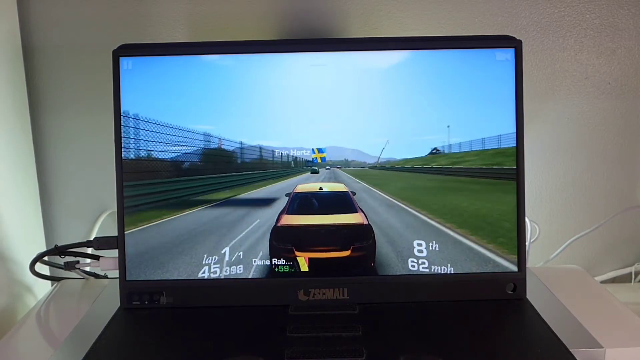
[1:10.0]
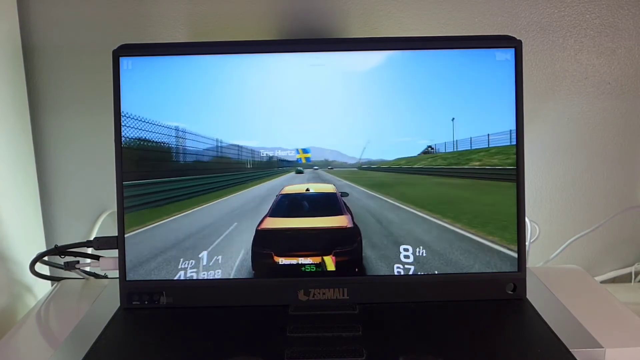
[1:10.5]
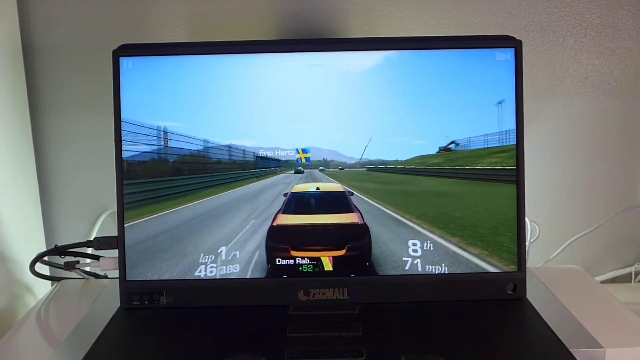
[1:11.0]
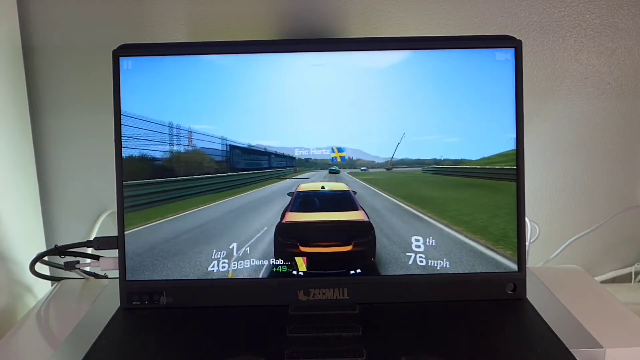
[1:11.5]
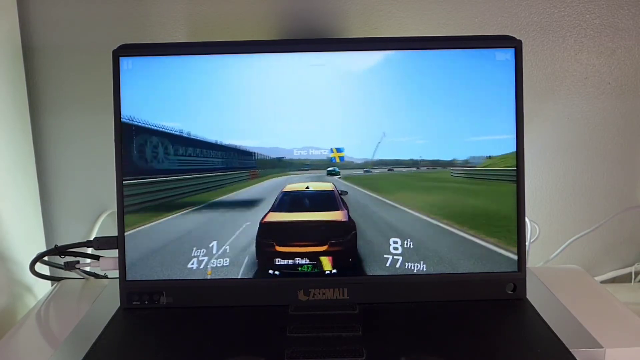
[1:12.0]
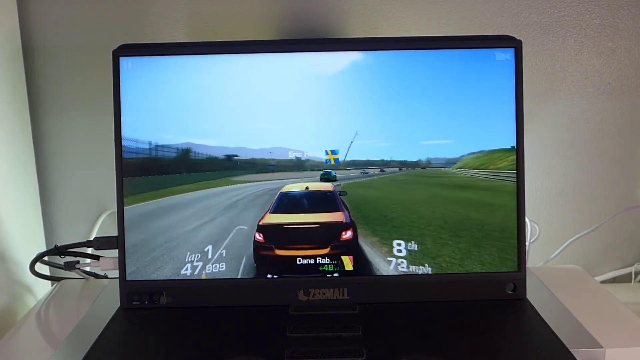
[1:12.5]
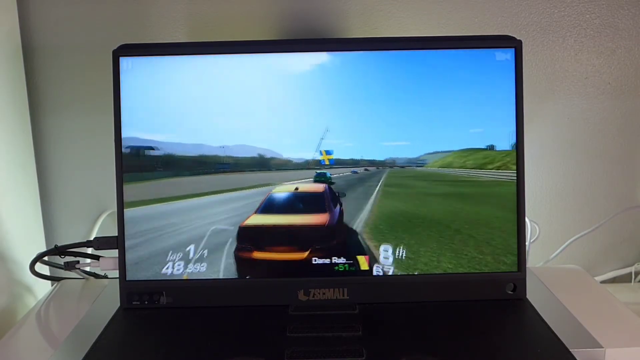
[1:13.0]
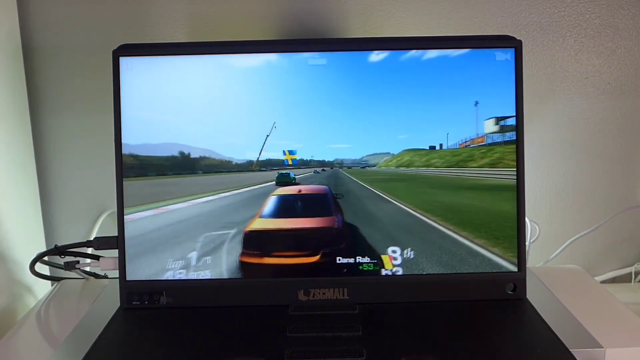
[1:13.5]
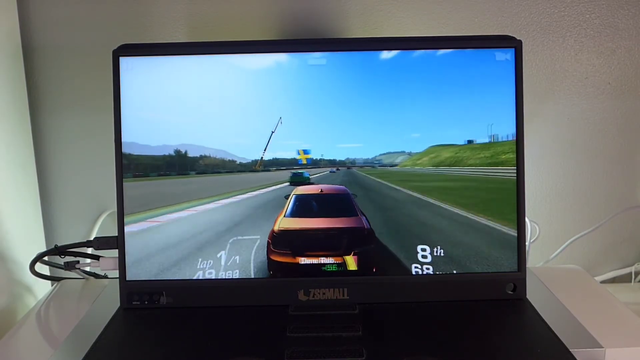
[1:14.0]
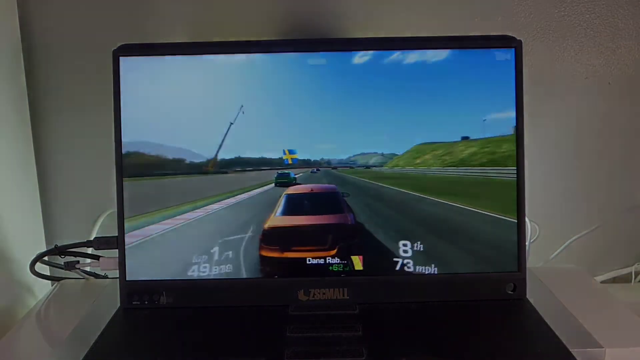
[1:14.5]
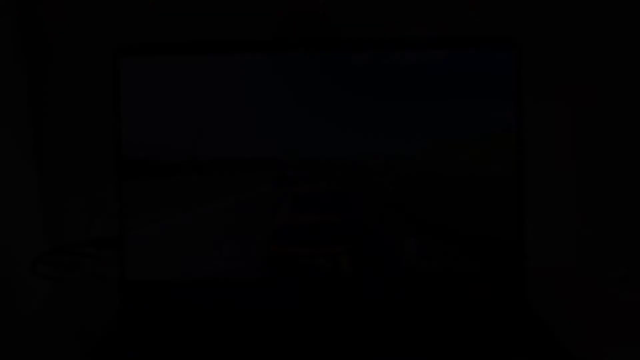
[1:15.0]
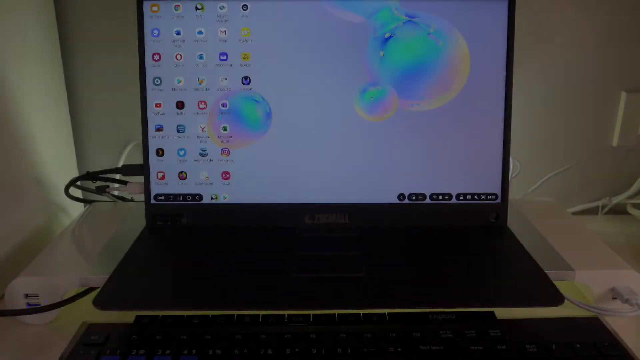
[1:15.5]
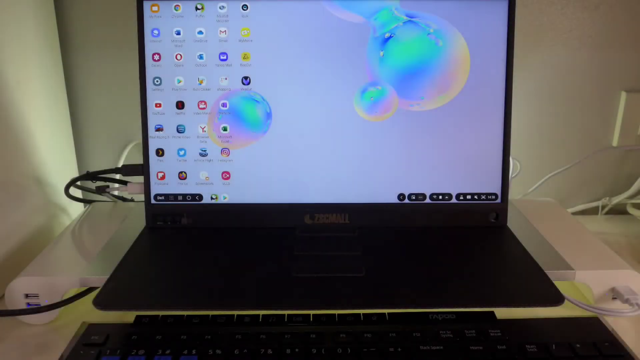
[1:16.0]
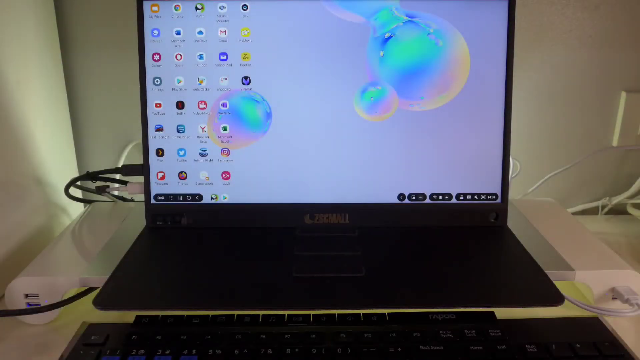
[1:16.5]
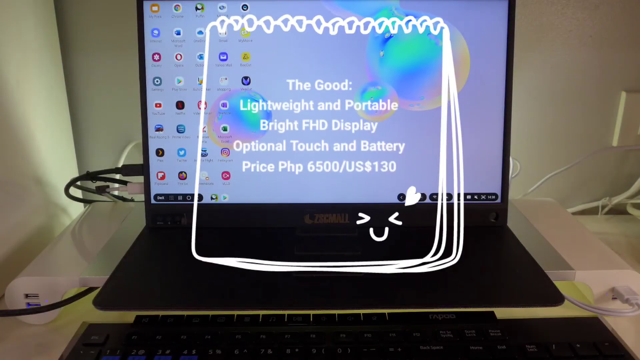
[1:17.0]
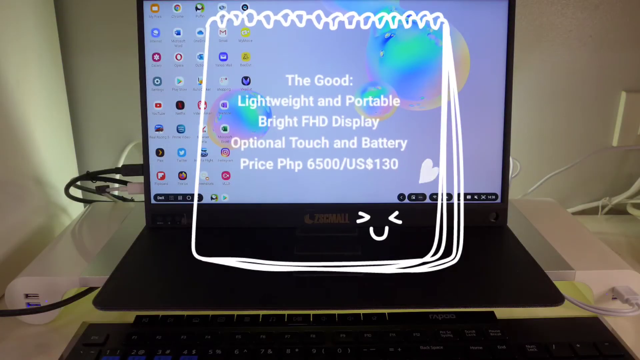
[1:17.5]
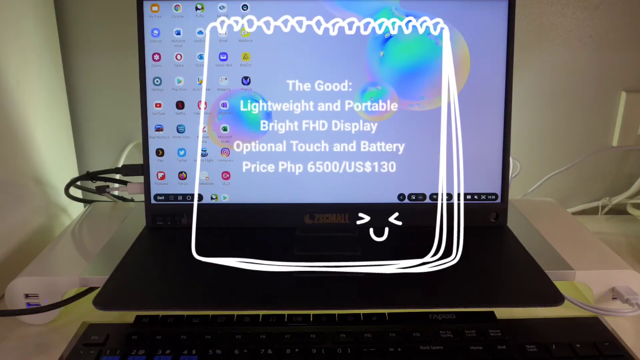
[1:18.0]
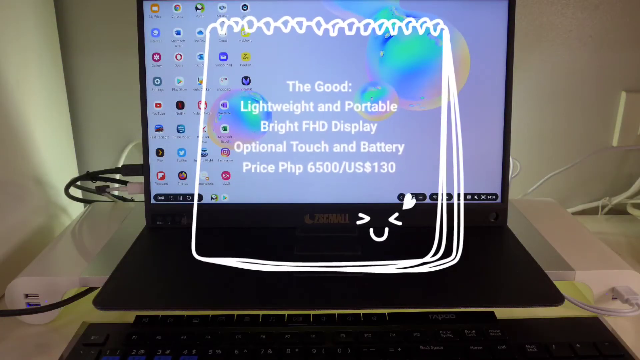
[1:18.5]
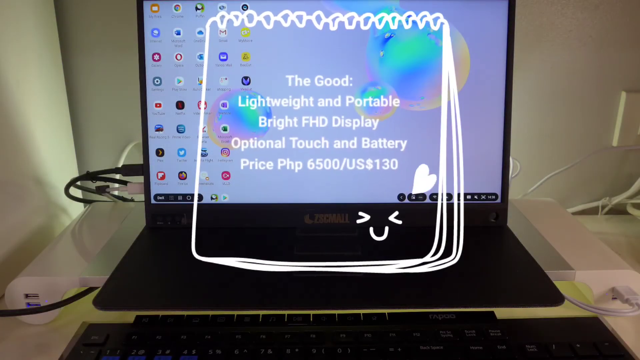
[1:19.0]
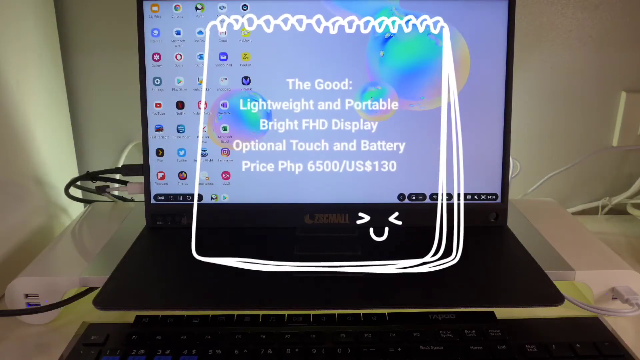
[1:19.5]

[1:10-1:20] In the center, seen head on, is what appears to be a tablet screen with a black bezel. A few wires in the lower left plug it into something that cannot be seen. The screen seems to show some sort of video game: an orange car or truck in the center, seen in third person, racing. This fades out to black and slowly fades in to the screen in a desktop format, with five columns of icons and bubbles in the wallpaper. The same wires are plugged in at the lower left, but the view is less zoomed in, so some sort of stand base below it is visible, black and flat. The surrounding walls are also visible.